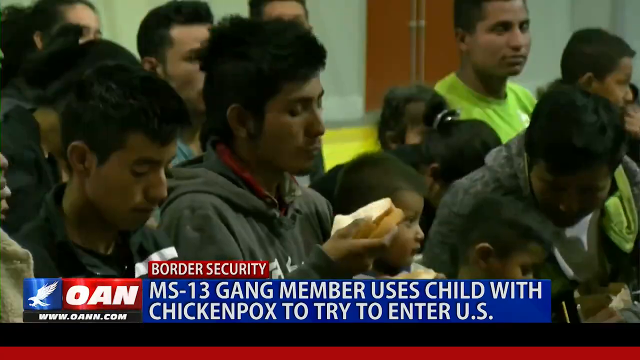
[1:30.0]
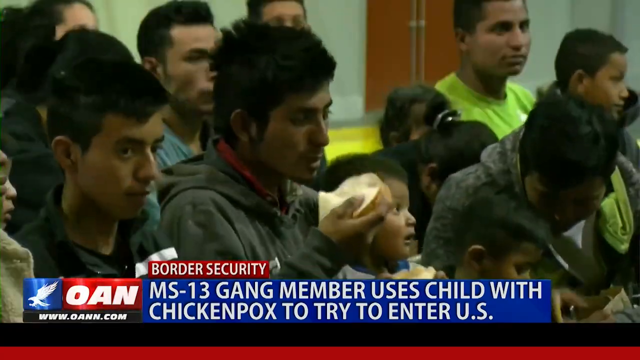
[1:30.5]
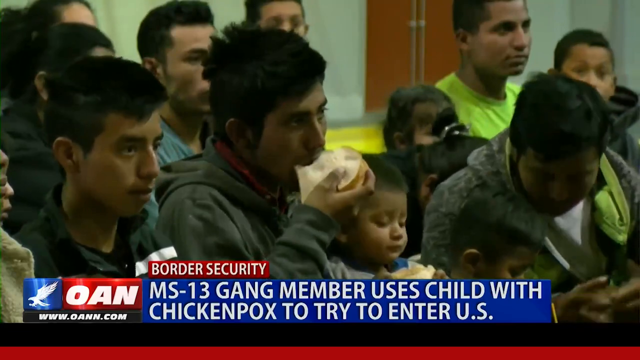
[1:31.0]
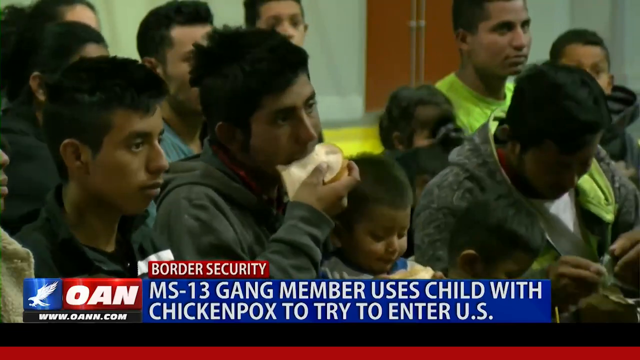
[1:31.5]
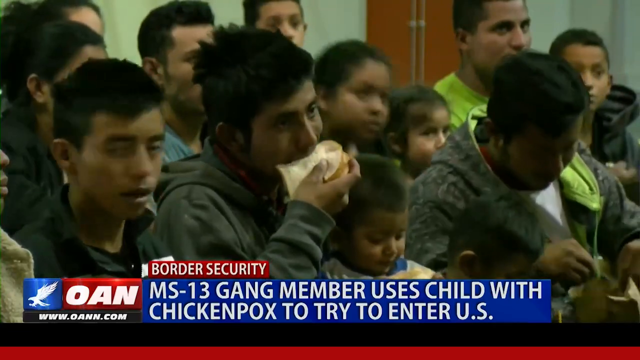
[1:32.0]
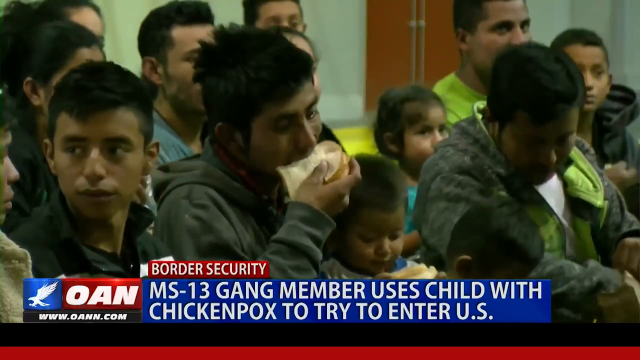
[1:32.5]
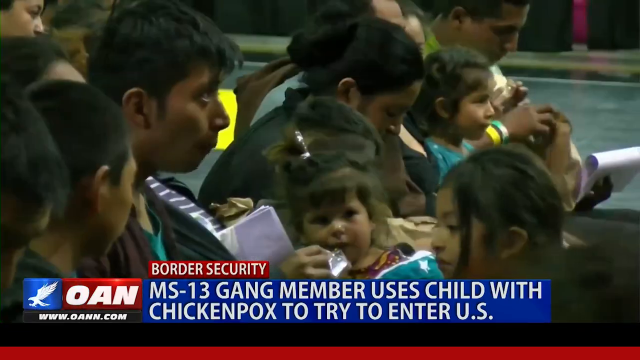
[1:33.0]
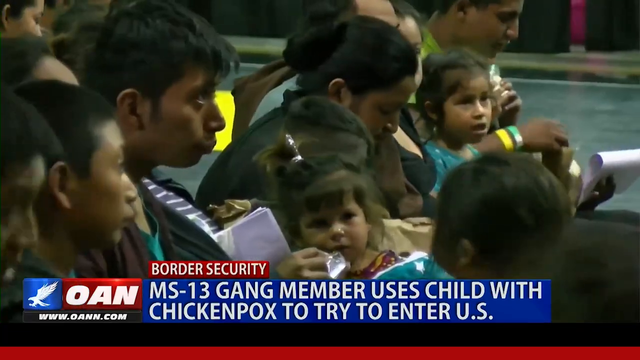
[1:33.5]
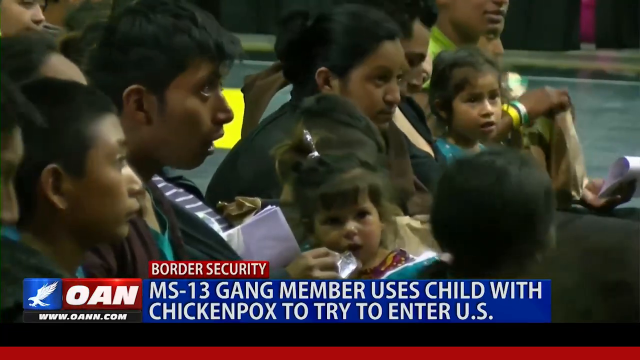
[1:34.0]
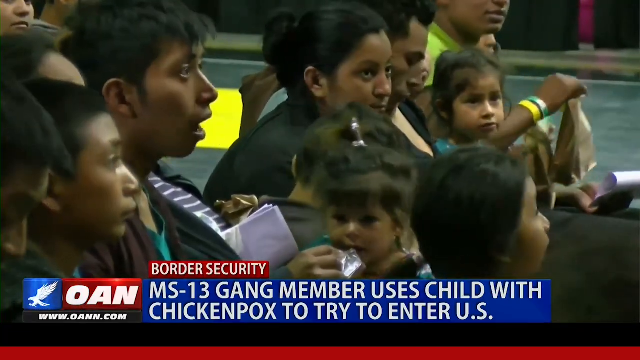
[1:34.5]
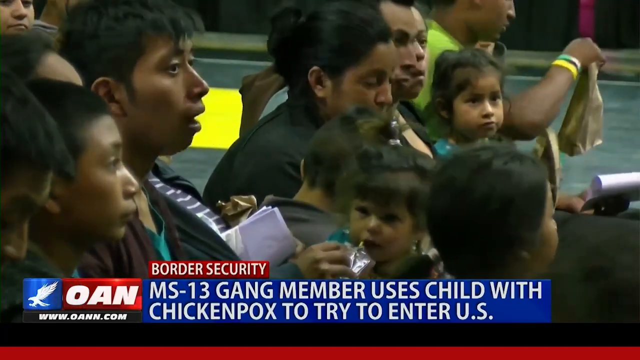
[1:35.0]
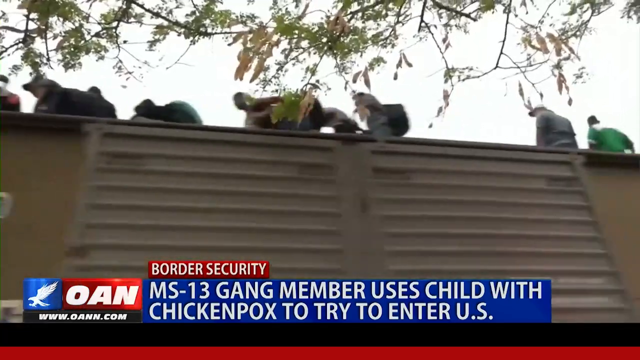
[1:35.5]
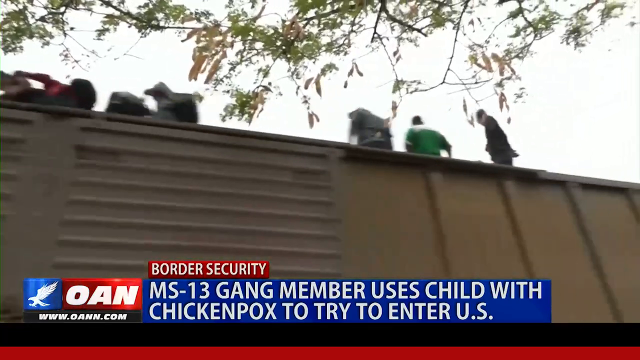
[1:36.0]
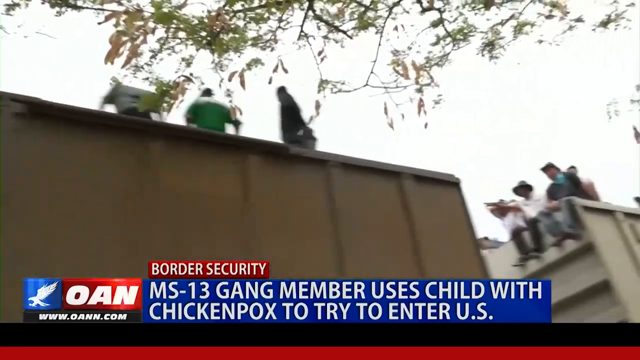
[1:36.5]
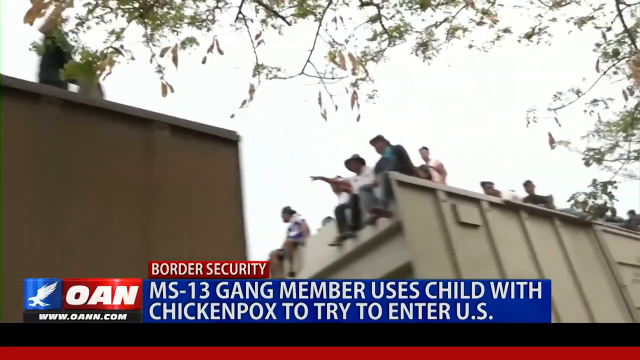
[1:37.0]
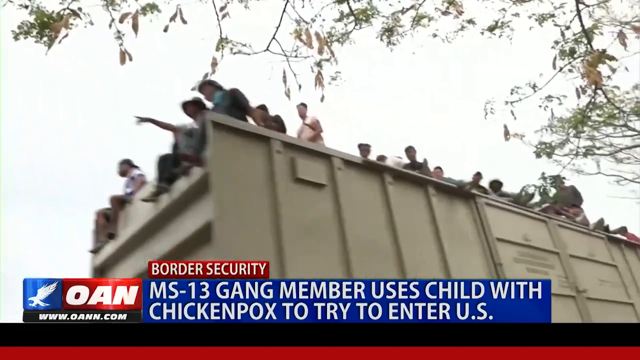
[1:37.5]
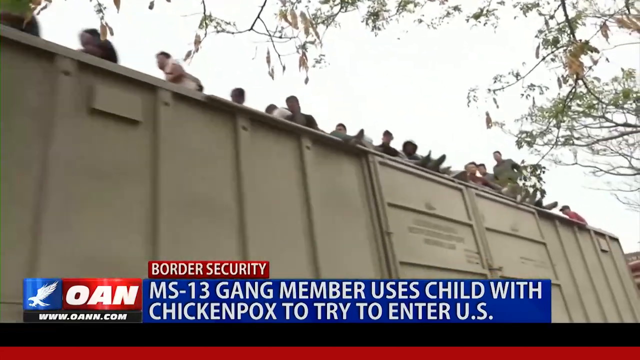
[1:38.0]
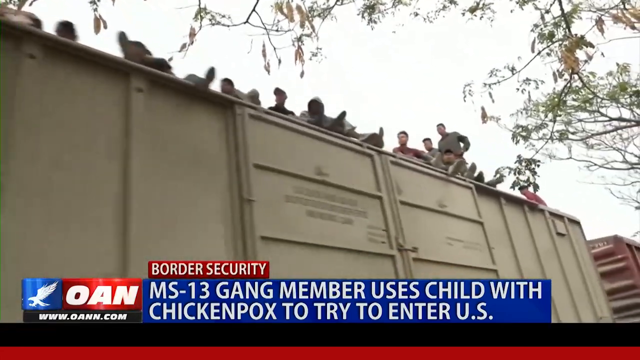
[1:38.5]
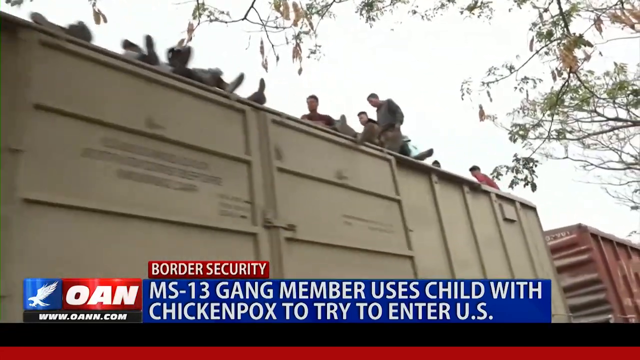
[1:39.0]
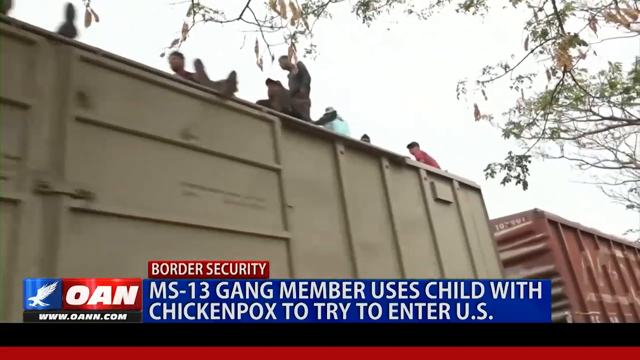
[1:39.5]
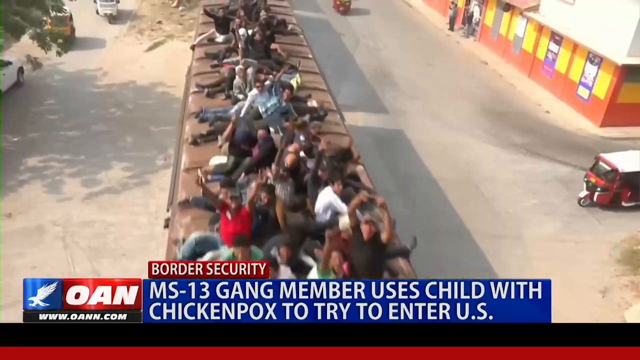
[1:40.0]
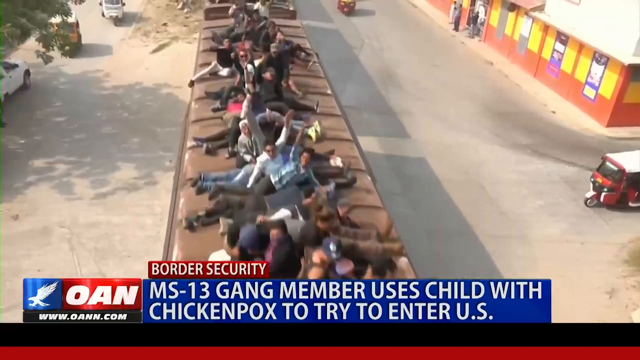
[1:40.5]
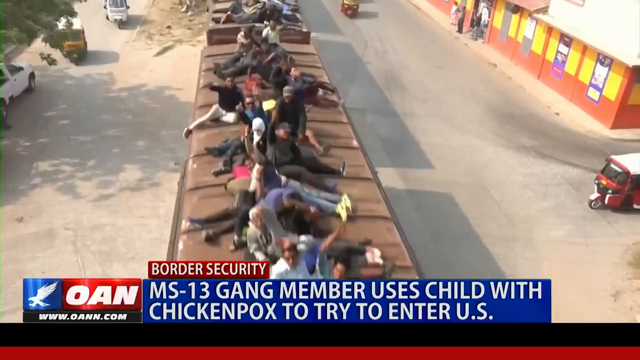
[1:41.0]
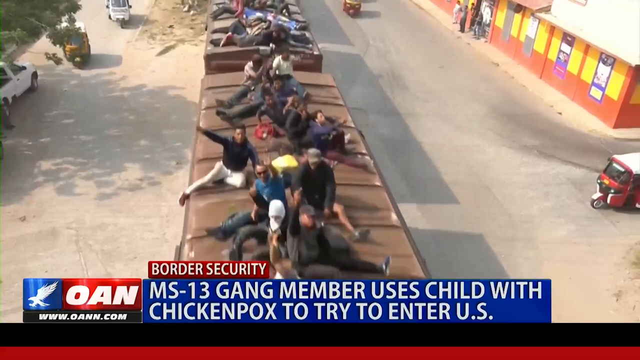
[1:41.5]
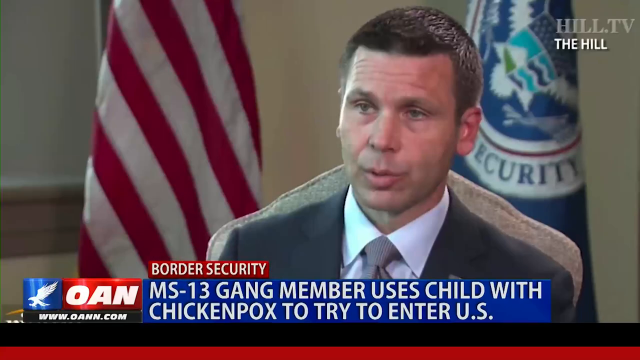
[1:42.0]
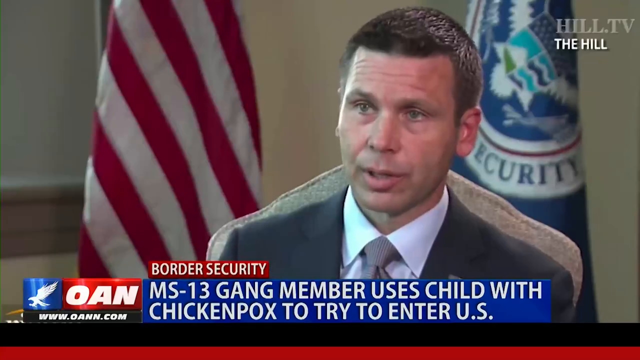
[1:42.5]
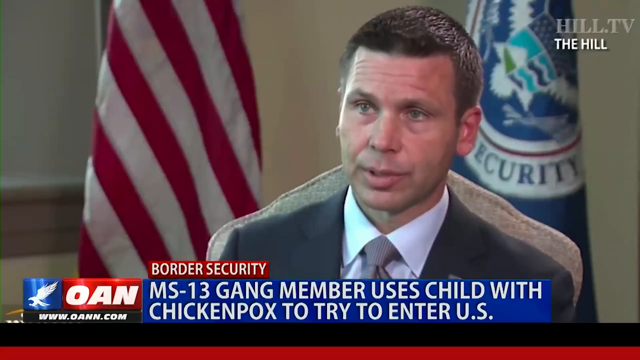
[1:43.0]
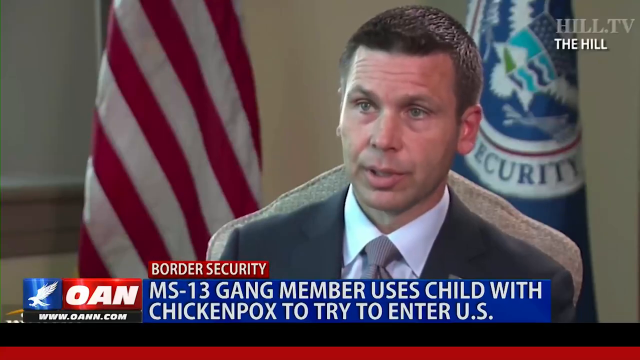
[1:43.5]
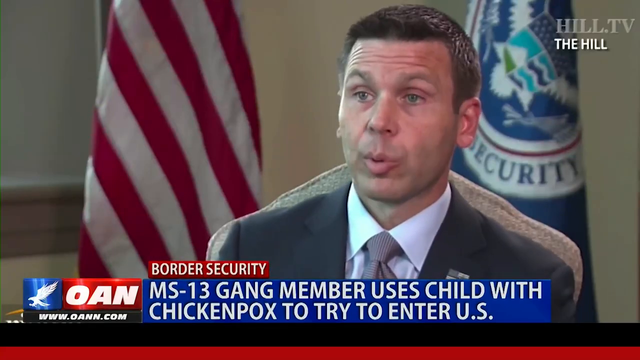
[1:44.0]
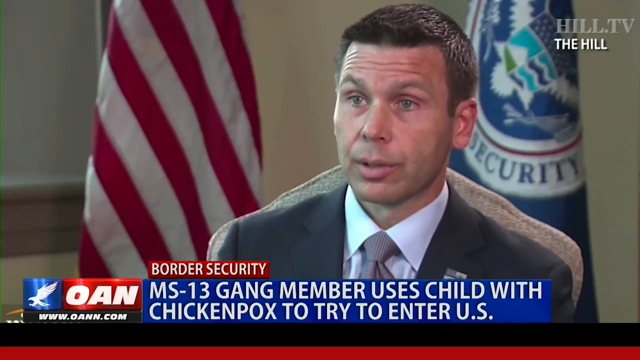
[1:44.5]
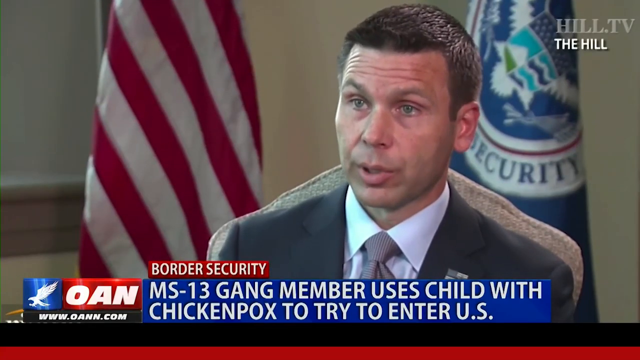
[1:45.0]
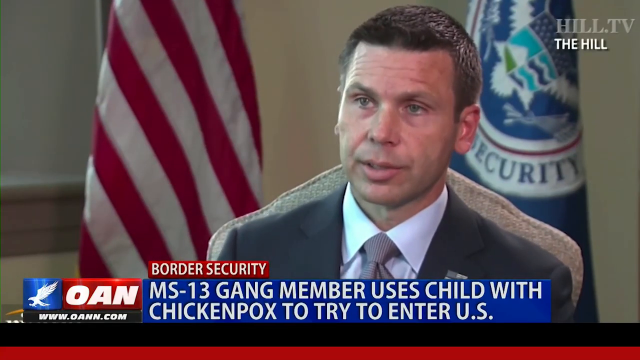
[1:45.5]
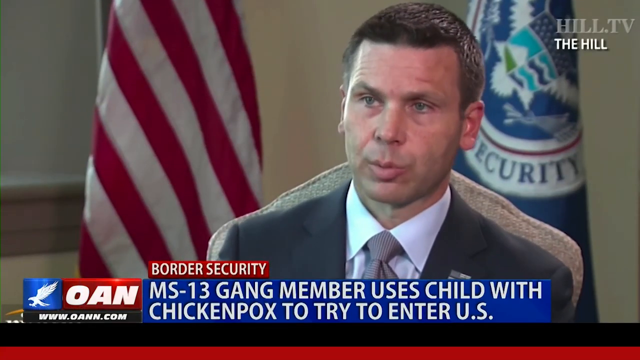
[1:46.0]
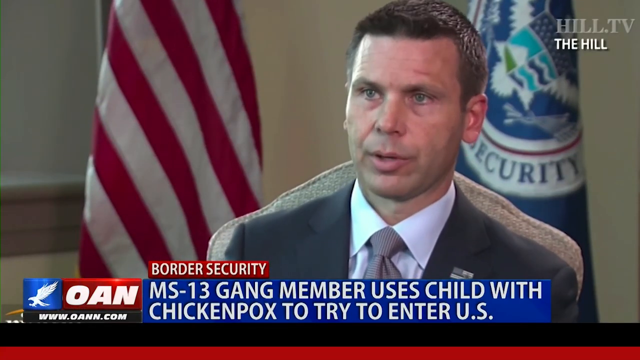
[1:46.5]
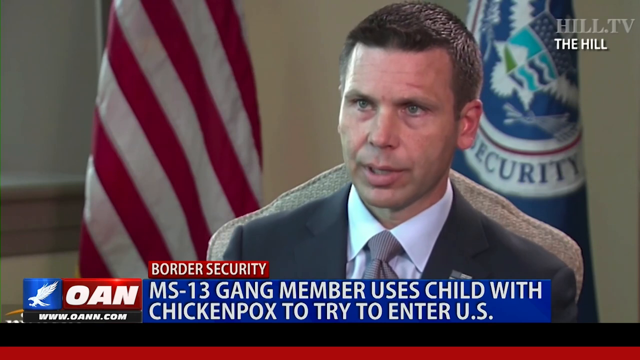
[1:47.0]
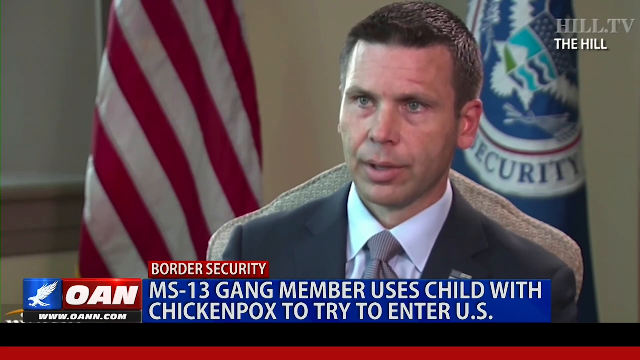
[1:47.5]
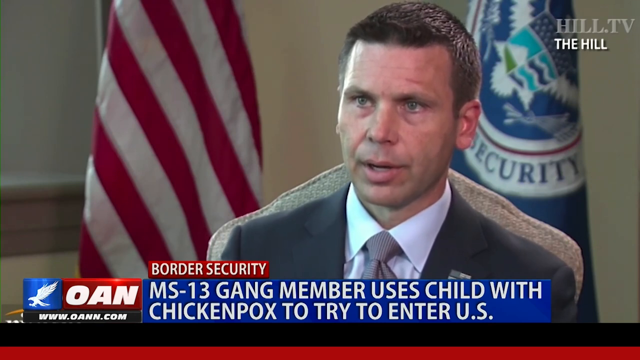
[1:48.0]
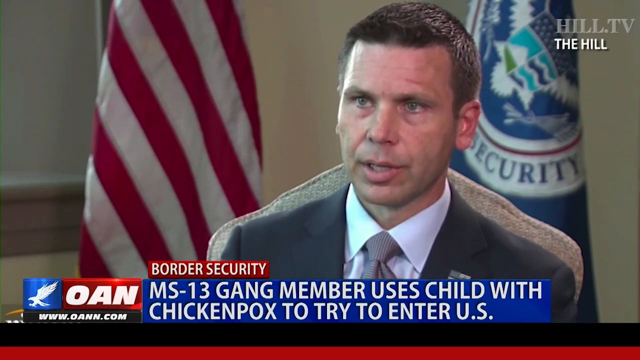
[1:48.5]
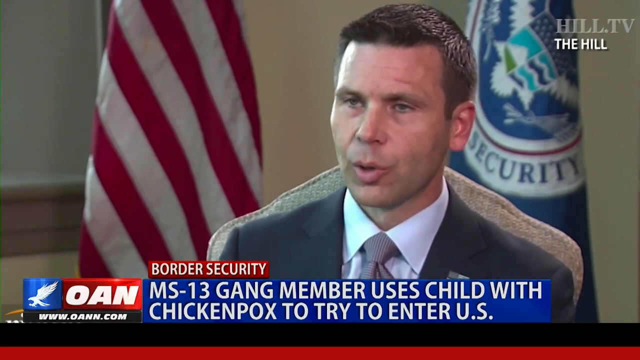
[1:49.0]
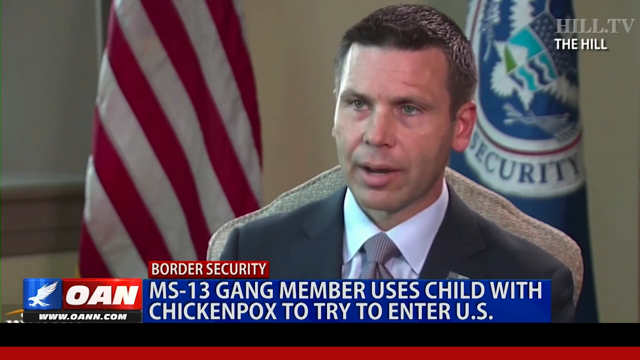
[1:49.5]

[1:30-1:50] A group of young Hispanic males eat food, and a couple of children are shown. A train travels with a large number of Mexican males sitting on top of it. Next comes an interview with a man in a suit who appears to be some type of security official, with the word "security" in the background; he may work for homeland security or border security.